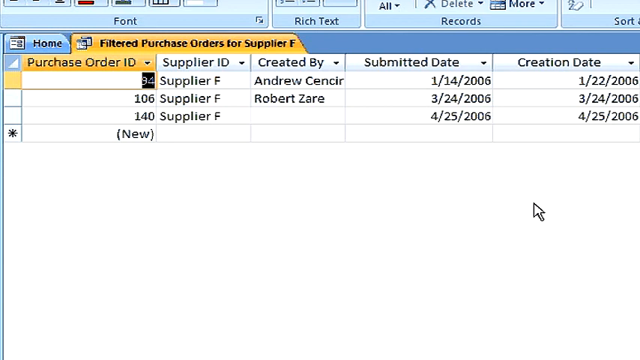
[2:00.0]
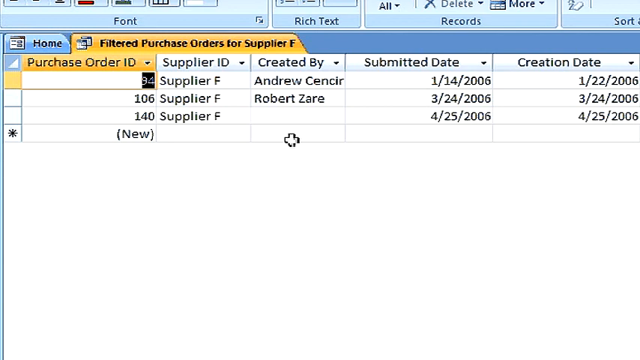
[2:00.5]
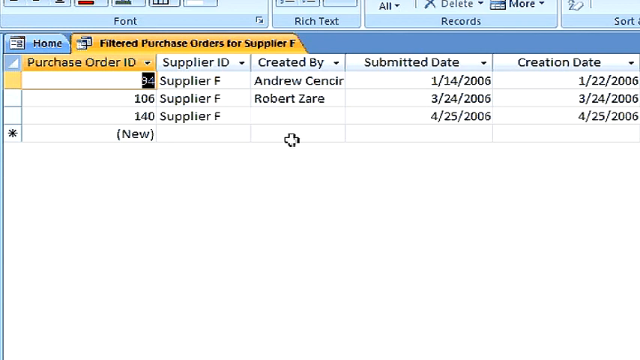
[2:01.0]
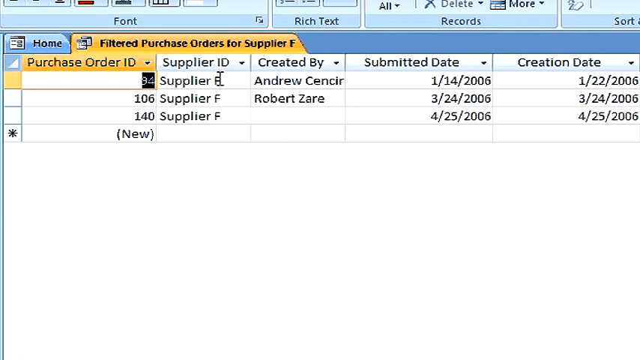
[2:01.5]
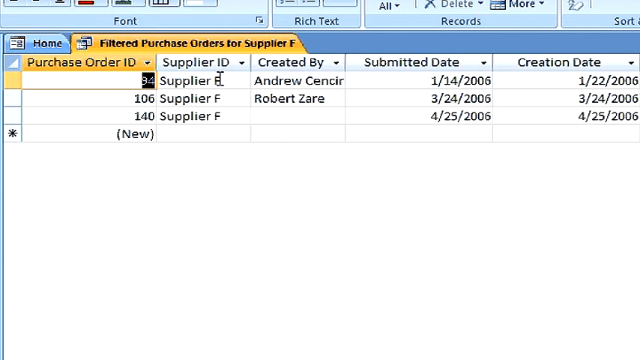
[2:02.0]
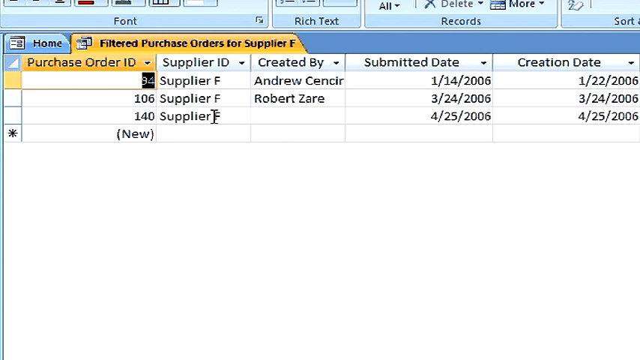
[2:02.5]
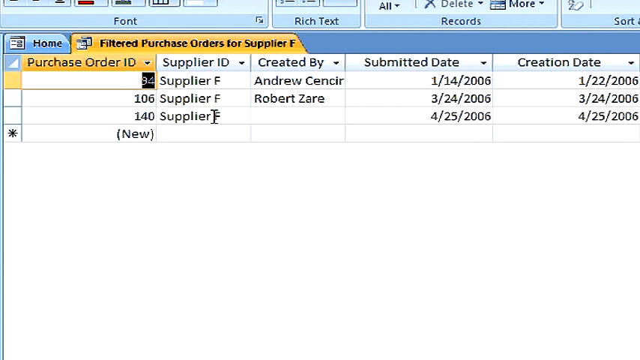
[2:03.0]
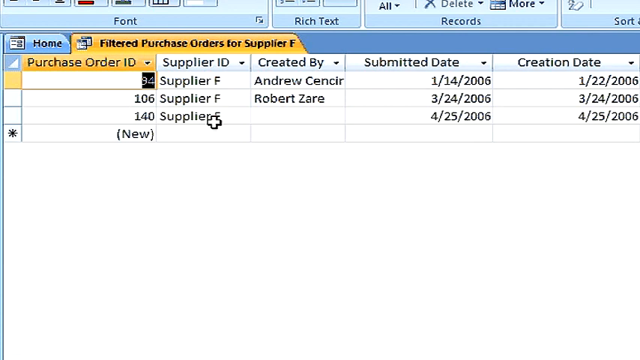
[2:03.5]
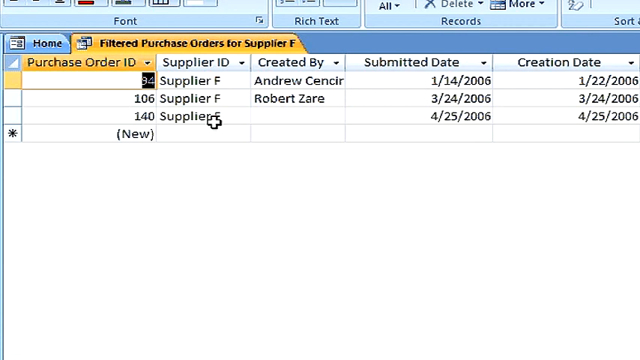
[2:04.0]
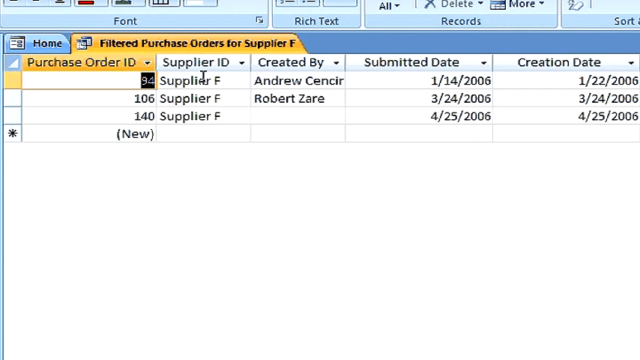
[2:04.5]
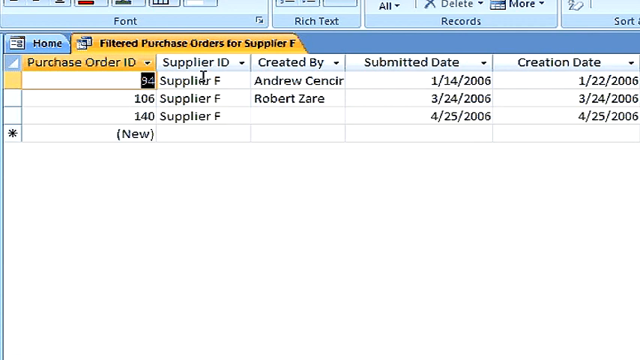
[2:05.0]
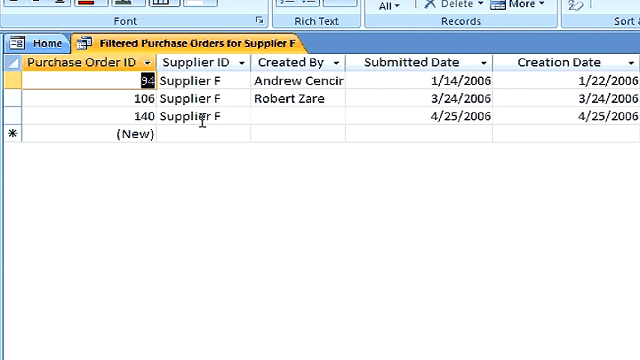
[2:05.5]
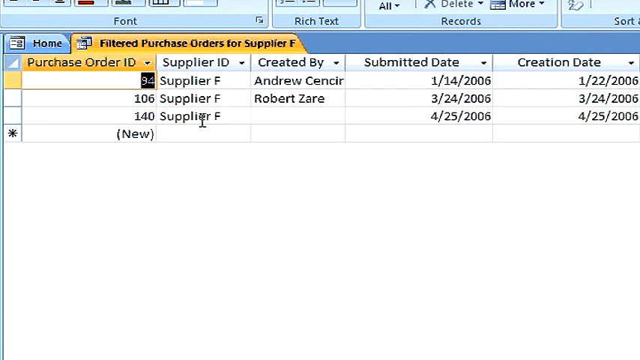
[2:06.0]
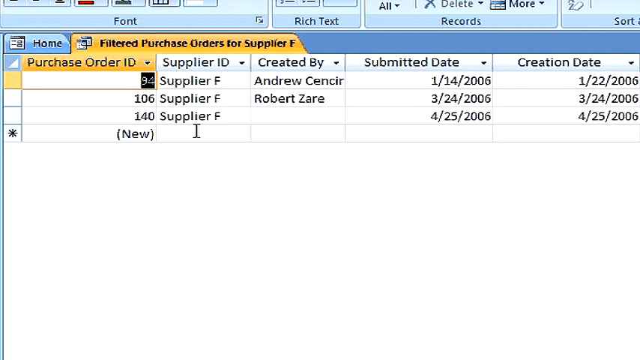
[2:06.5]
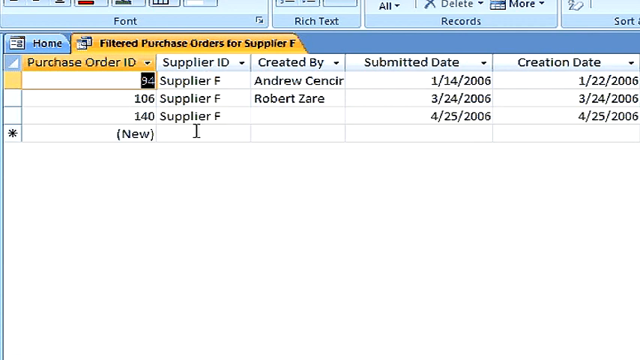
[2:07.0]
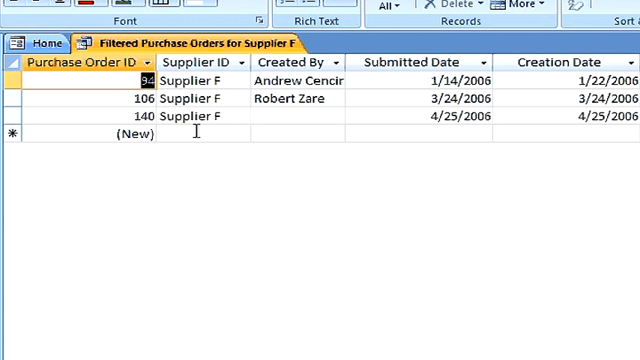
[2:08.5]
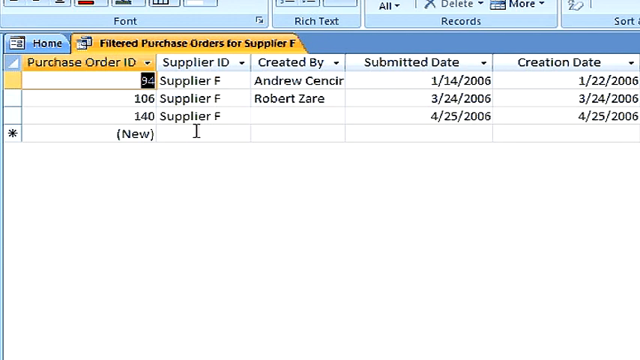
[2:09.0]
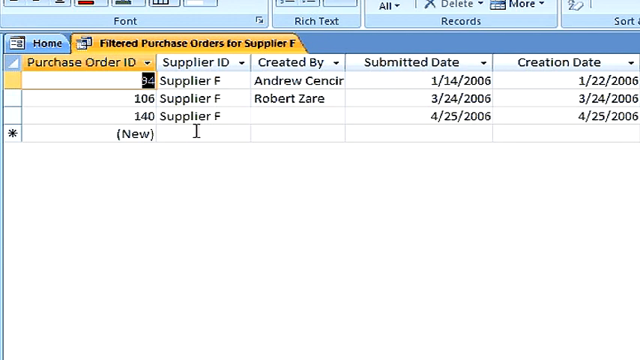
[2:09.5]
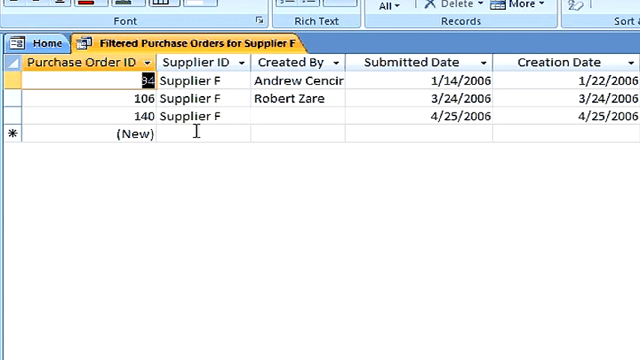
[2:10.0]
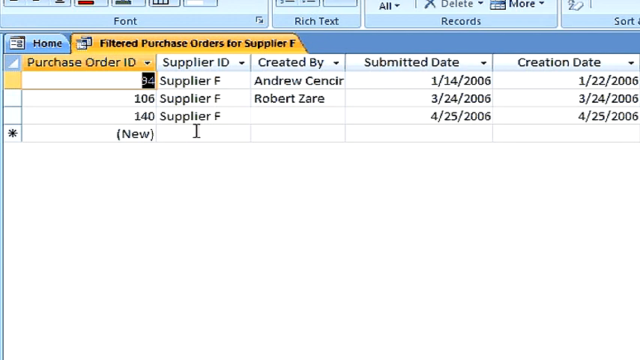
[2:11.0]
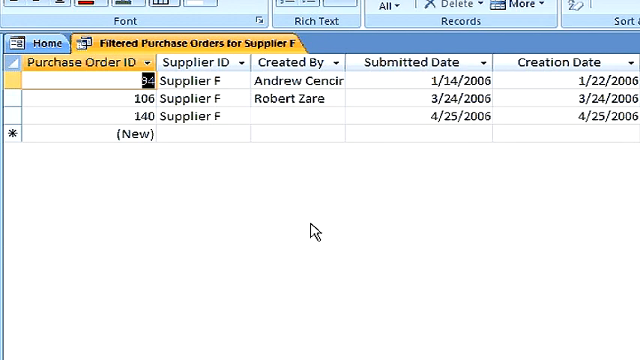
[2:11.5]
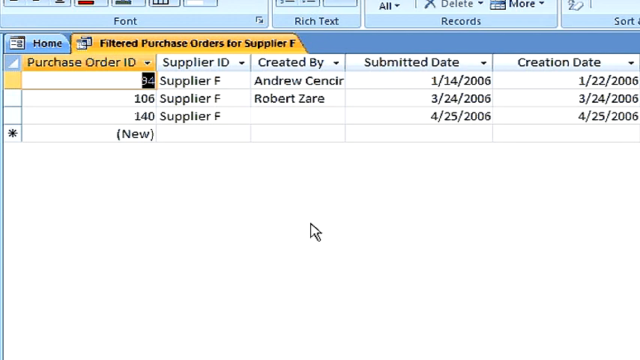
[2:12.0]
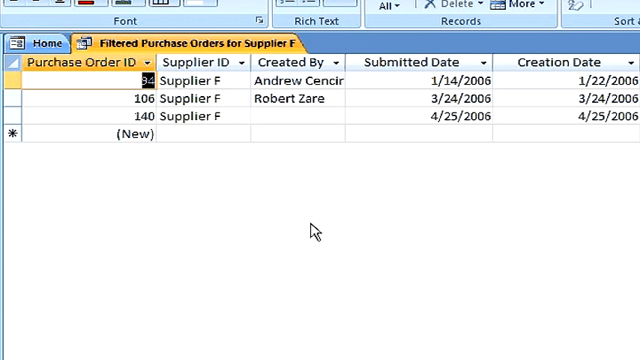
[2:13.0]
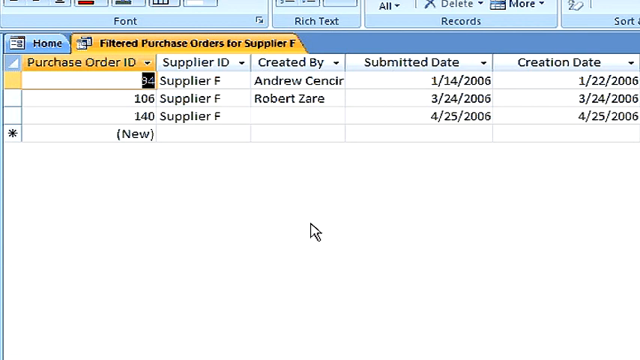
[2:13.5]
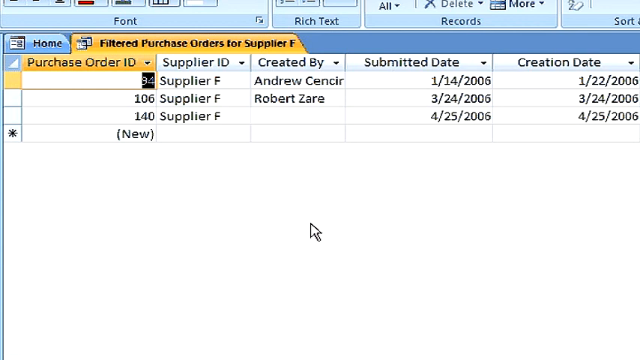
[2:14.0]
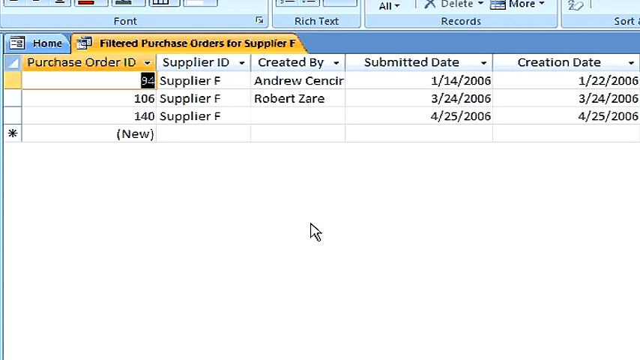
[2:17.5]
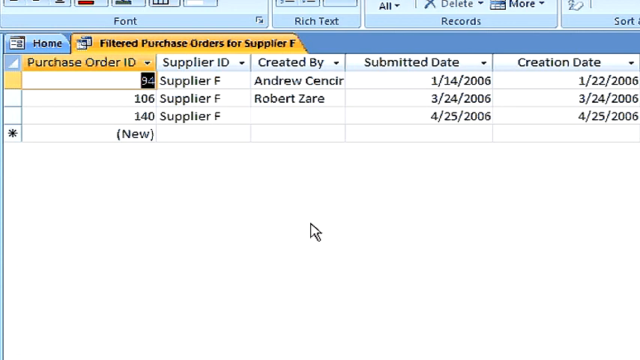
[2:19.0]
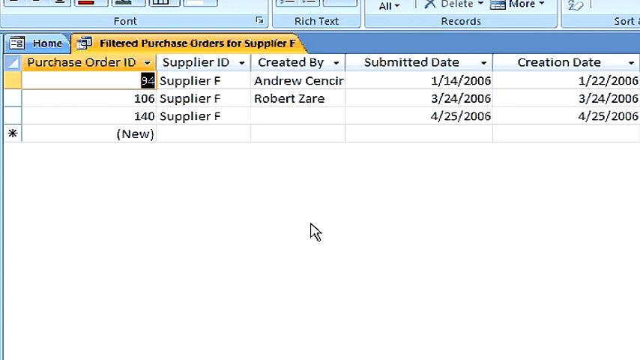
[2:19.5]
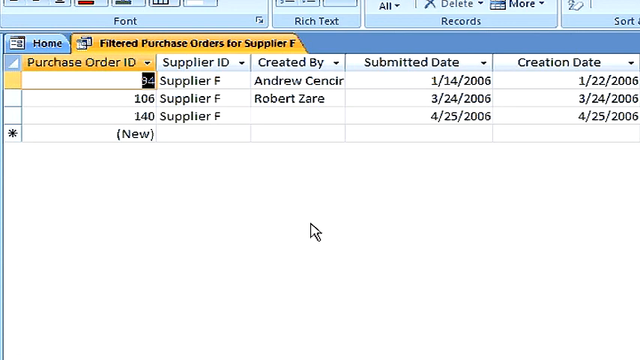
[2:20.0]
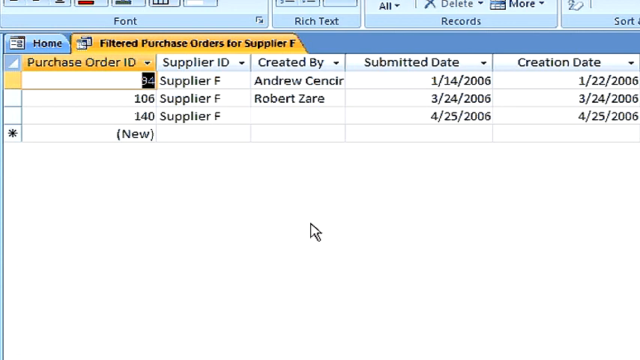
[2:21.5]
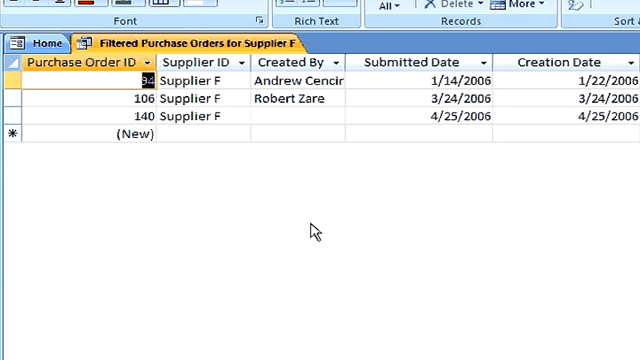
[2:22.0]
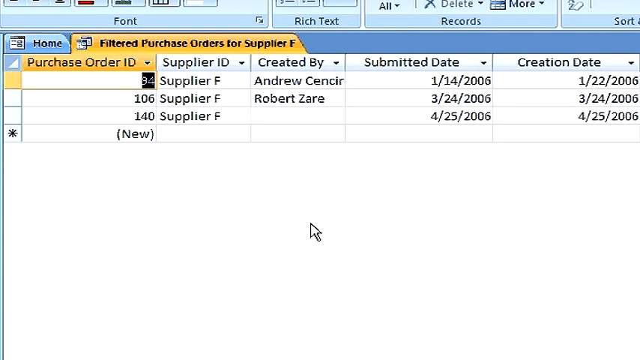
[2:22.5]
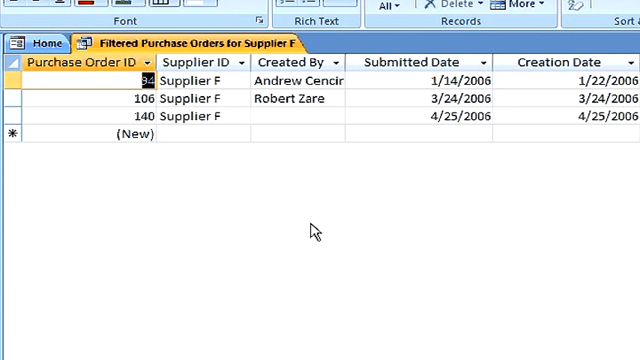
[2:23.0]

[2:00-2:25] The "filtered purchase orders for supplier F" tab of the Access screen shows a filtered selection of three transactions, all with supplier F. The presenter's cursor moves on the screen, hovering over different cells and over the supplier F column, and moves around a little more. Then the cursor stops moving, and the same single screen remains until the video ends.